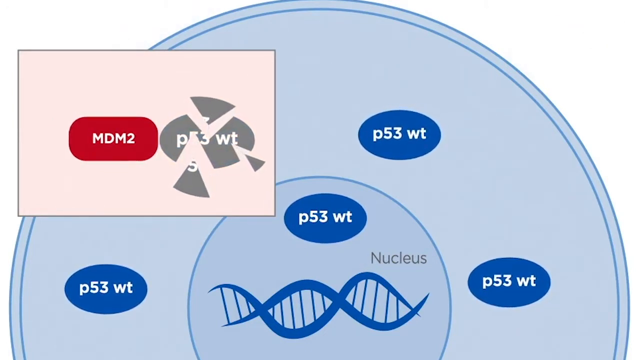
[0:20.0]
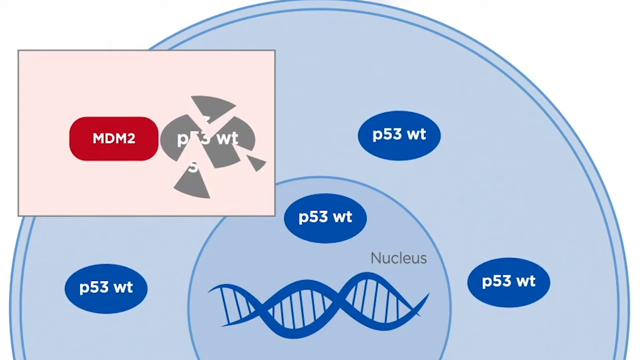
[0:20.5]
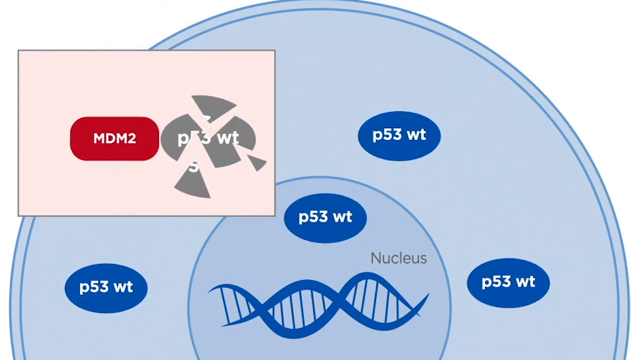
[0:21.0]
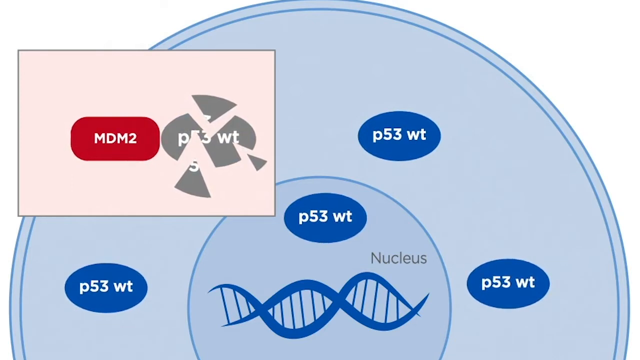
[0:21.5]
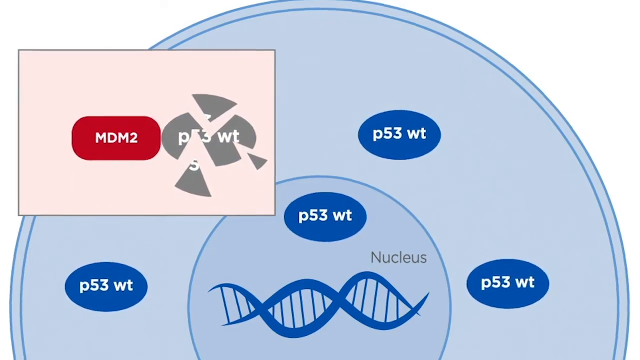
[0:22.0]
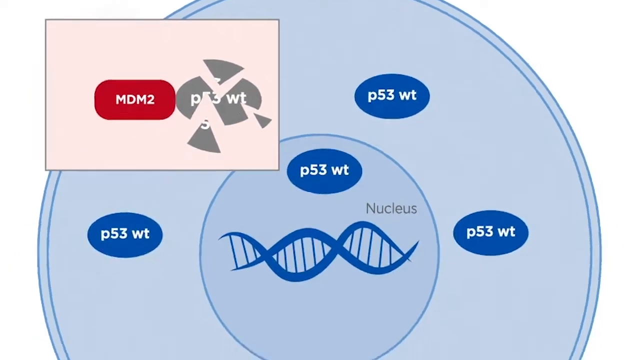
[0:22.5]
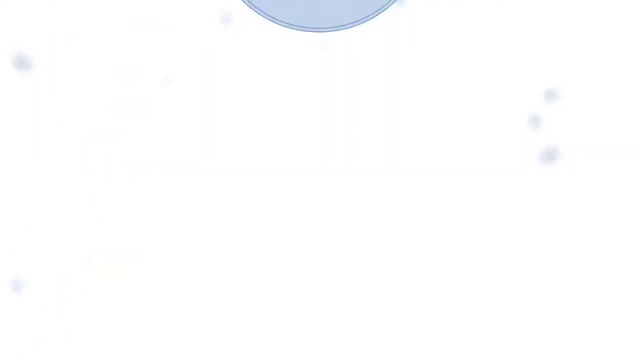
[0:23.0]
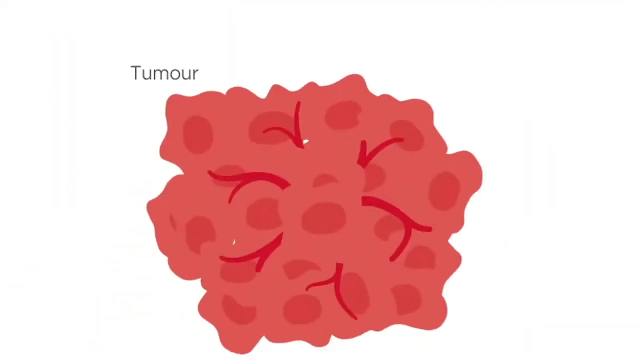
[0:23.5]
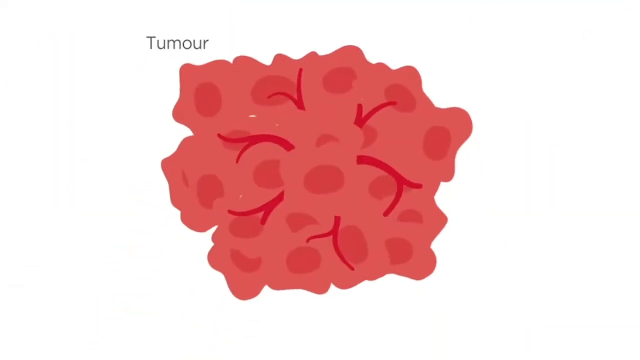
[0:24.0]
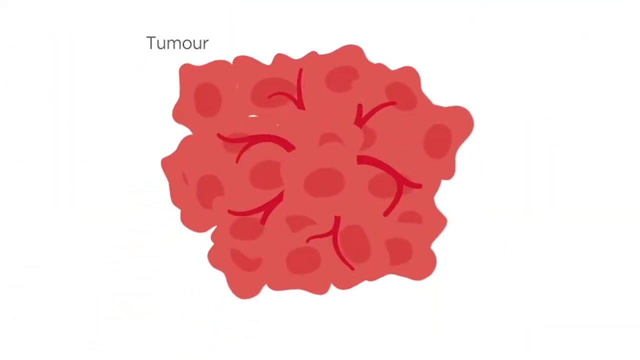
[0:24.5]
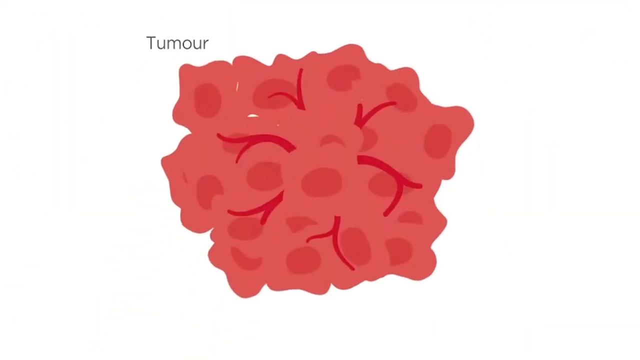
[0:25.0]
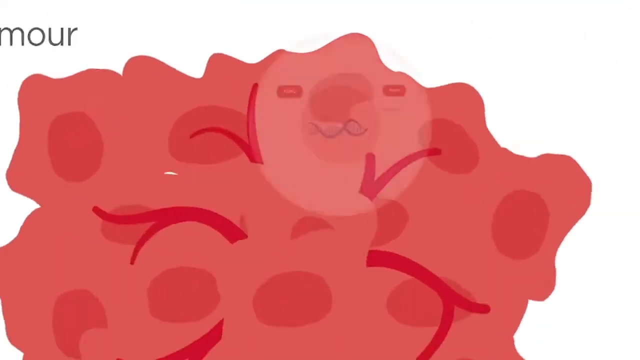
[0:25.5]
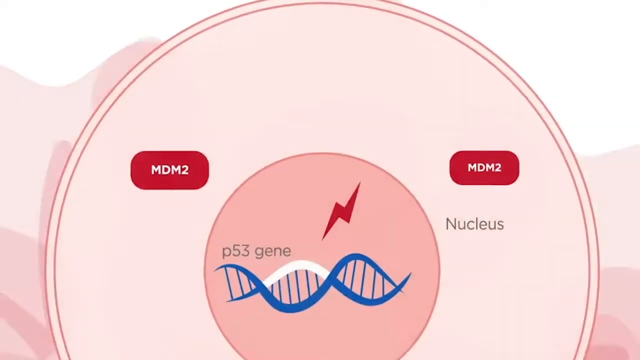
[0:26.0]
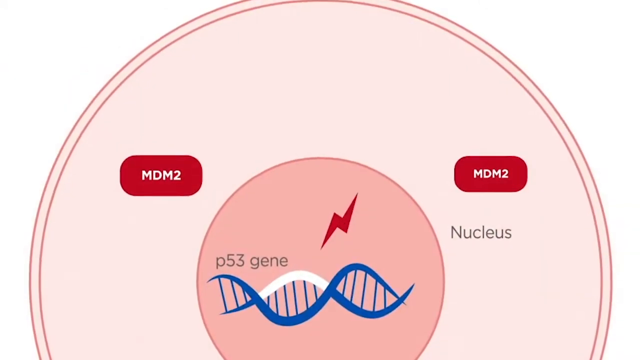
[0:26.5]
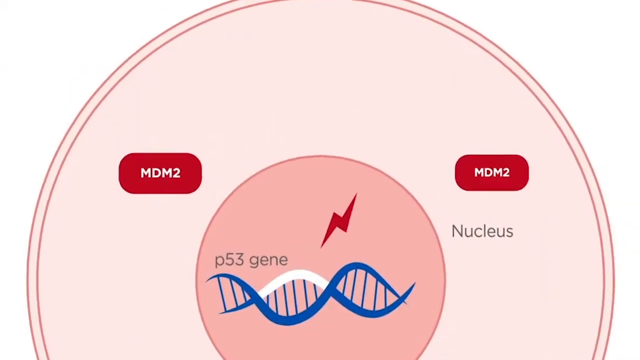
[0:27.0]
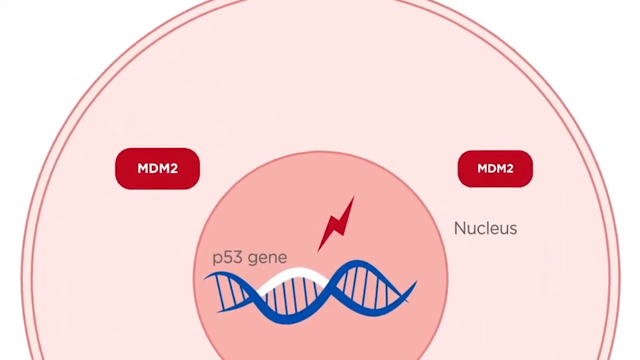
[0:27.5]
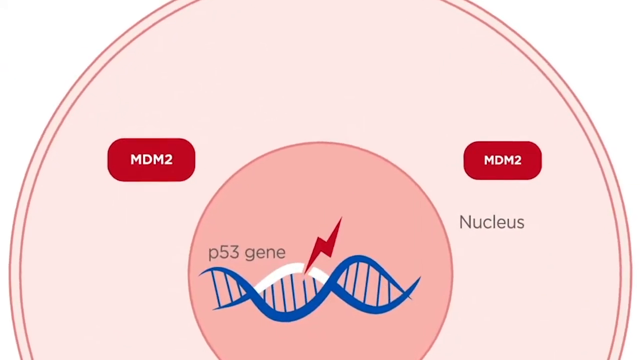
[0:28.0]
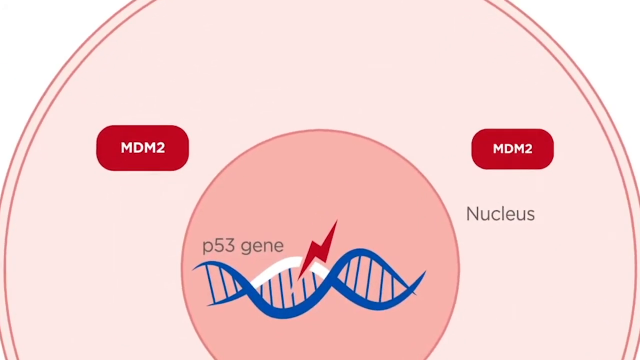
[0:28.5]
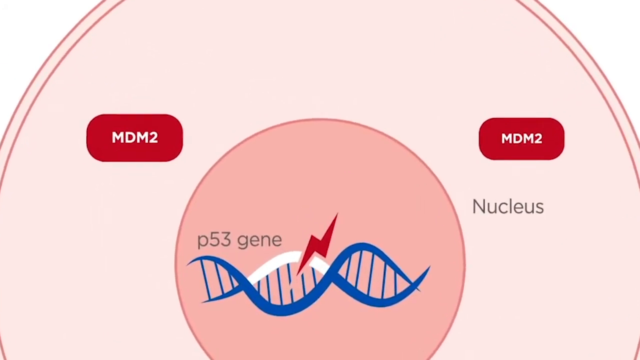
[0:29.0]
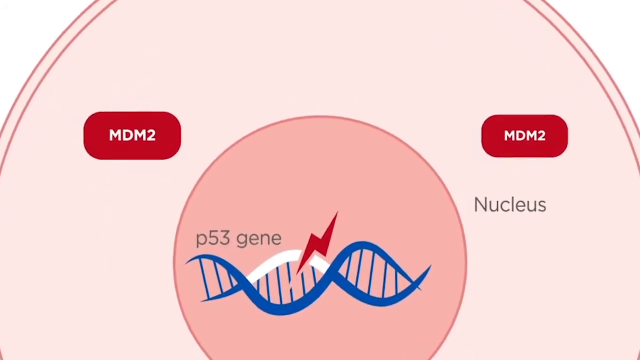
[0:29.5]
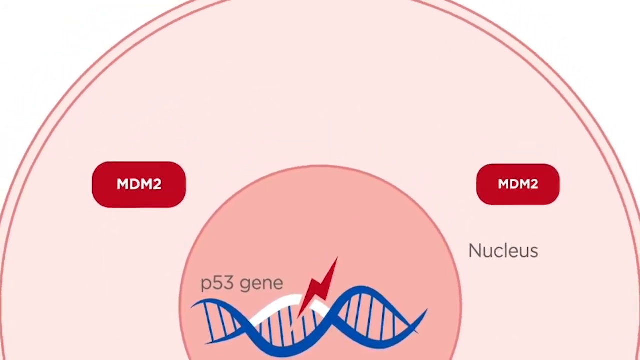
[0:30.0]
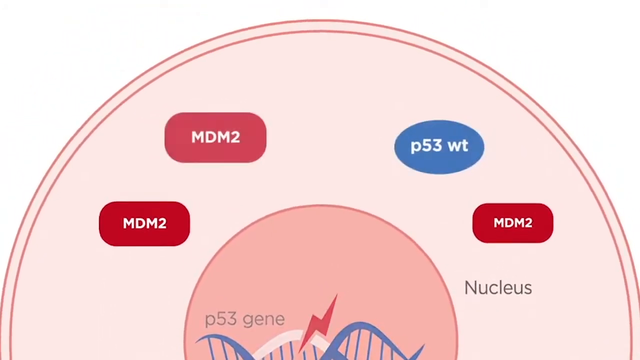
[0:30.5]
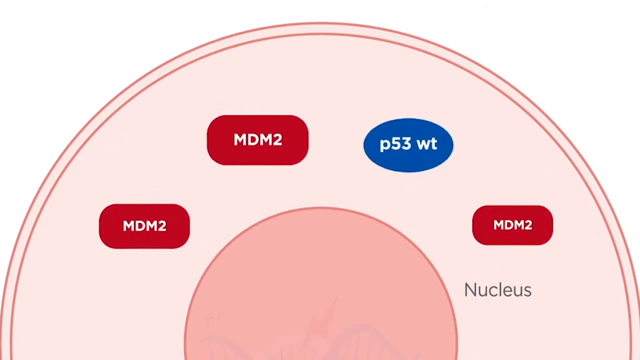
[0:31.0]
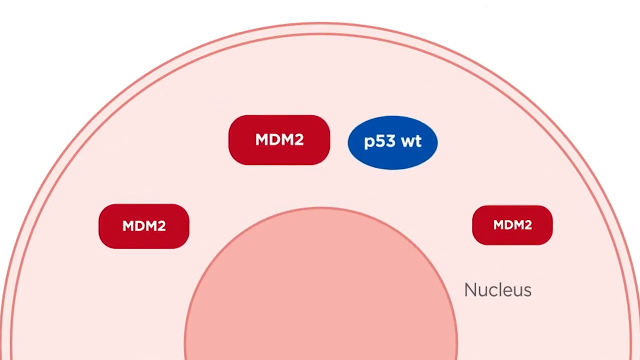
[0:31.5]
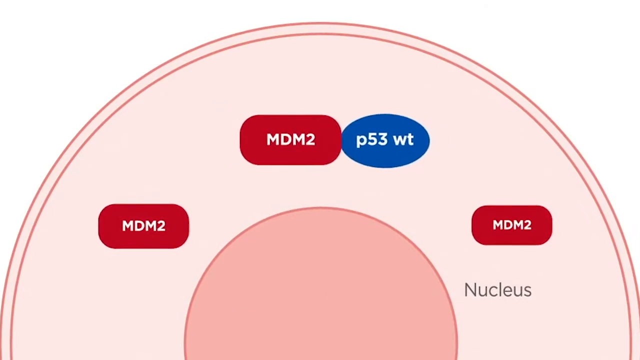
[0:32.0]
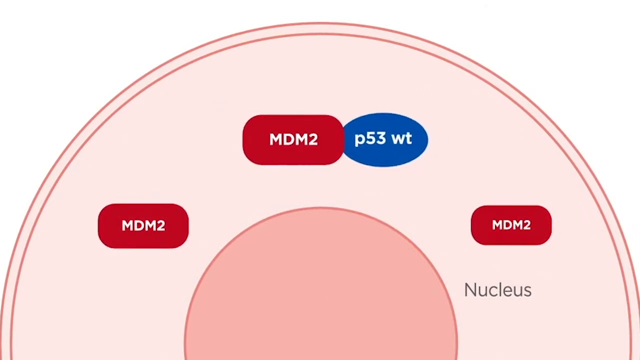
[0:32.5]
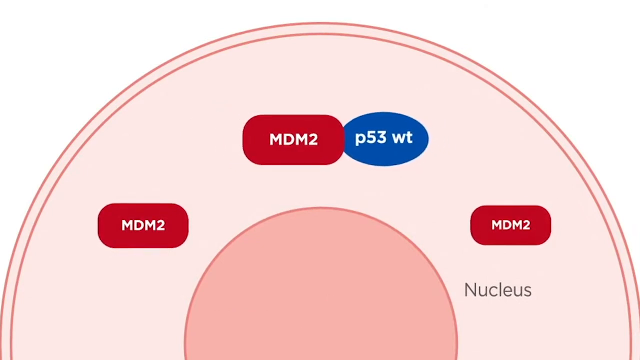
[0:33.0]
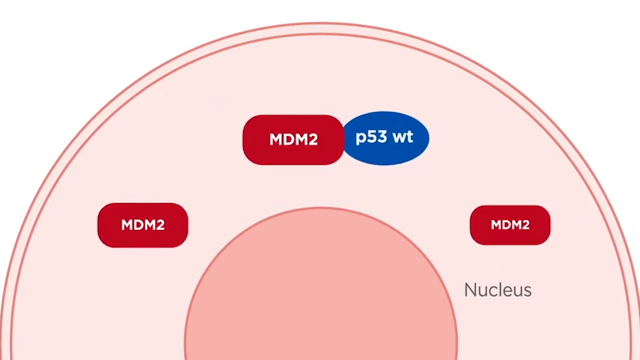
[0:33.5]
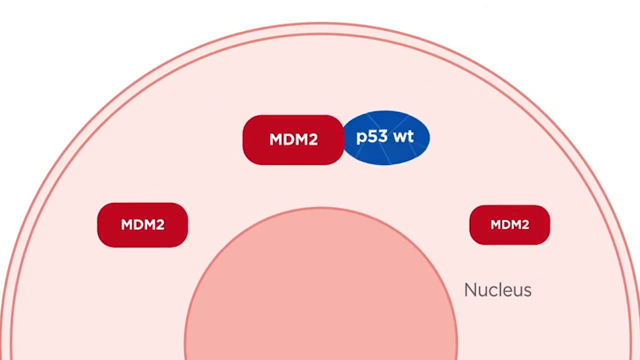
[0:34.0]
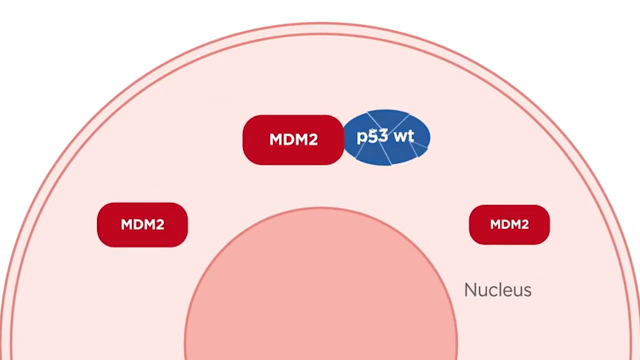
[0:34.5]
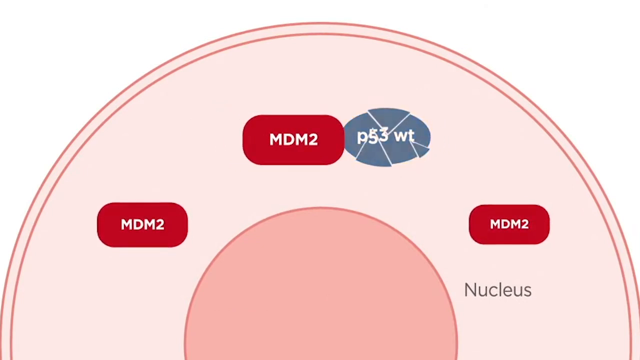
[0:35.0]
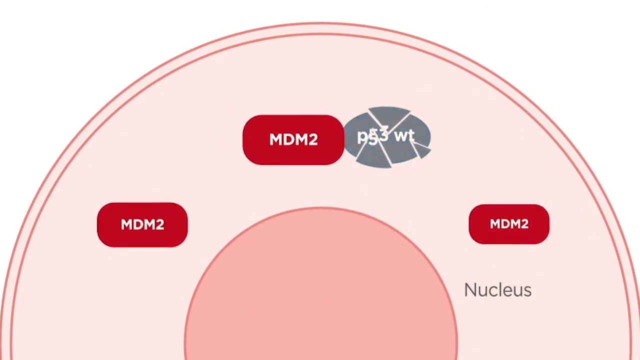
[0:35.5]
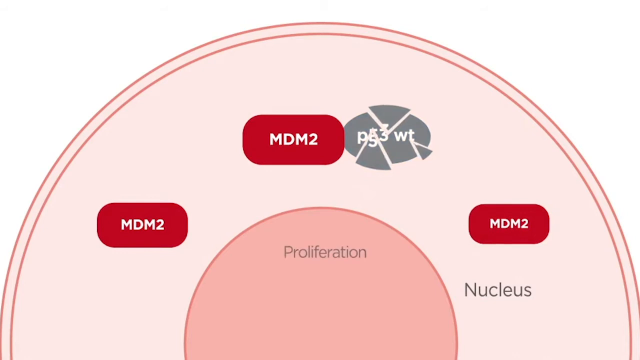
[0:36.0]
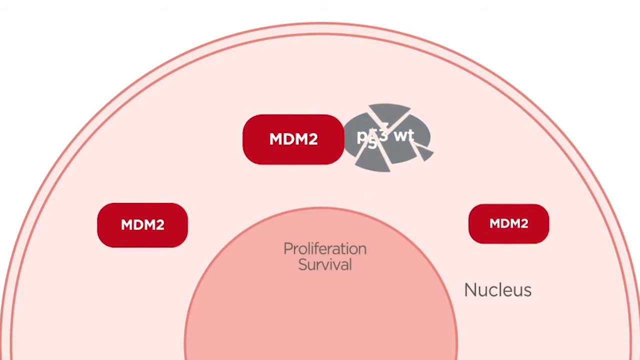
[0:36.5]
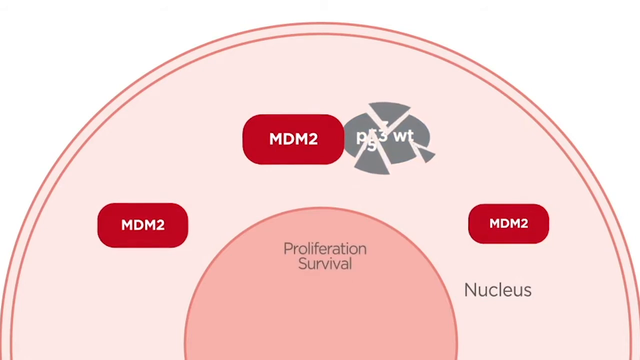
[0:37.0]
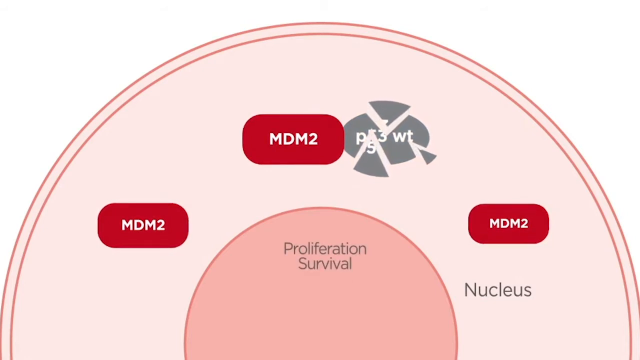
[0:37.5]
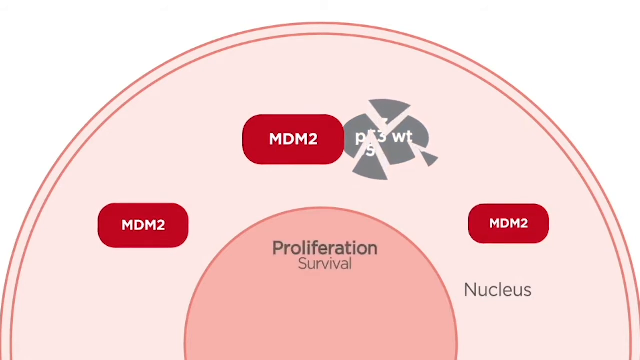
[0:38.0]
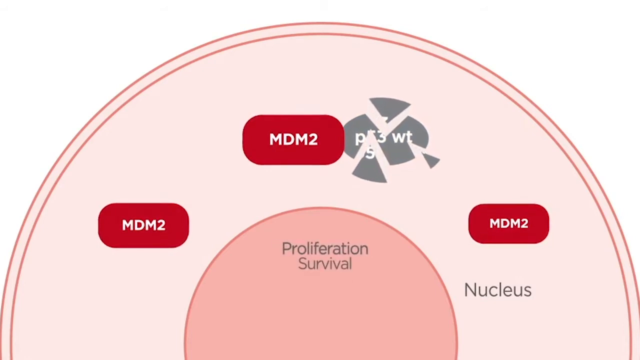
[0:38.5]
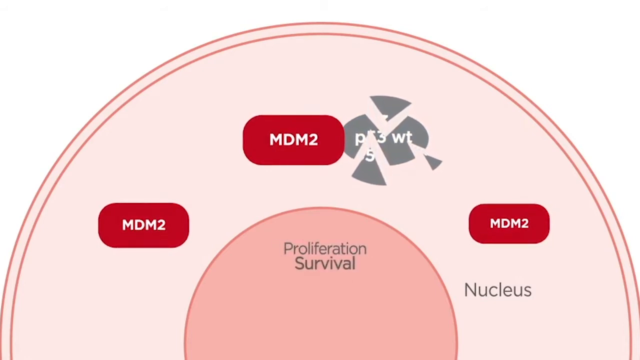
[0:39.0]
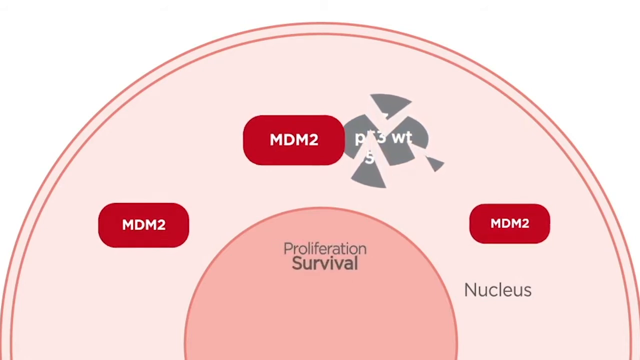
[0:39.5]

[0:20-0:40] A large blue cell is shown; it is round with a smooth outside. In a pop-up box, MDM2, drawn as a red oval, breaks up a cell labeled P53, which is pictured as a grey oval. The next page shows a red round object representing a tumor; it is not completely round and has rough, scalloped edges around the outside. A diagram of a cell with a tumor shows the red MDM2 colliding with the gray P53 and breaking it up completely. The full diagram of the cell is visible, with the nucleus and the gene labeled; the gene is blue with white running through it.